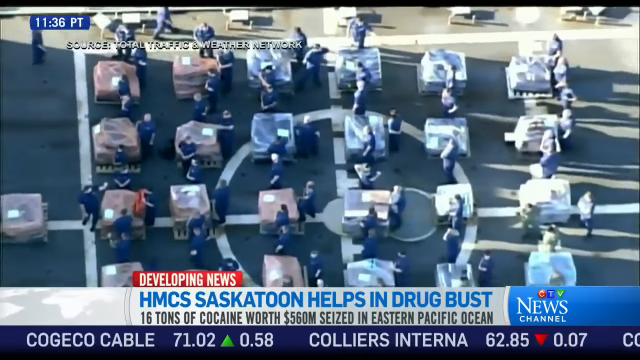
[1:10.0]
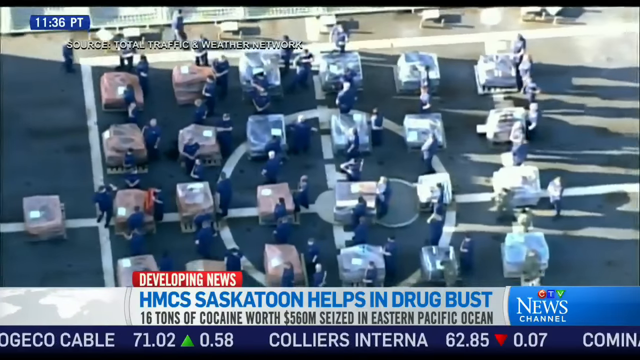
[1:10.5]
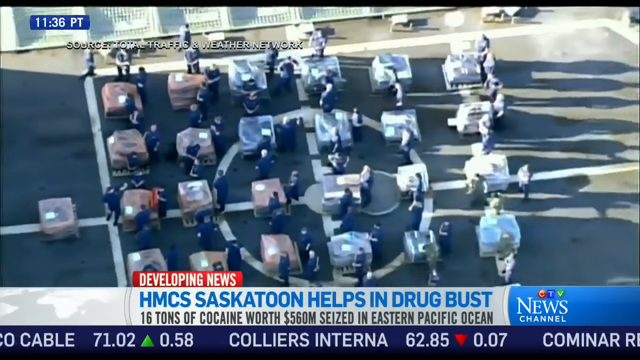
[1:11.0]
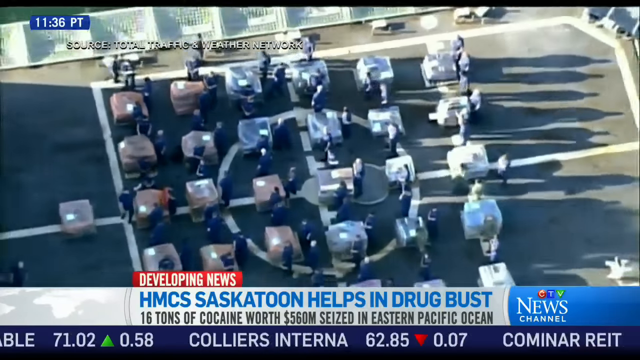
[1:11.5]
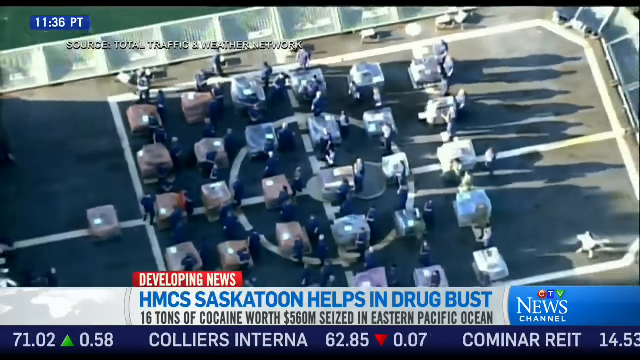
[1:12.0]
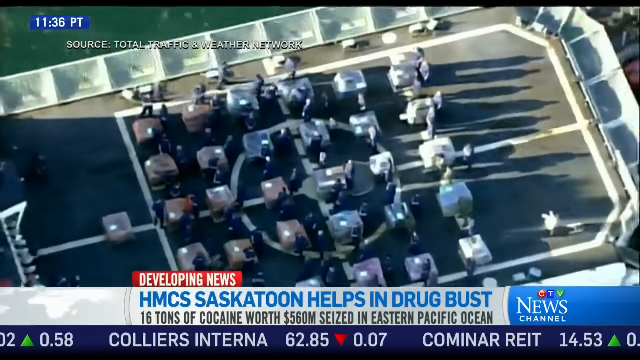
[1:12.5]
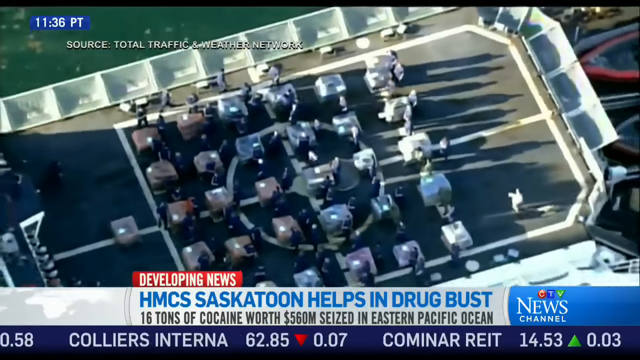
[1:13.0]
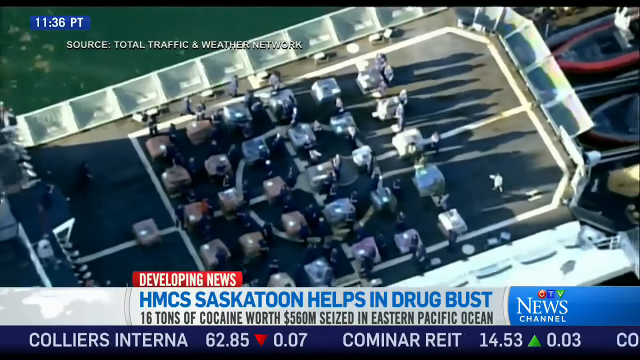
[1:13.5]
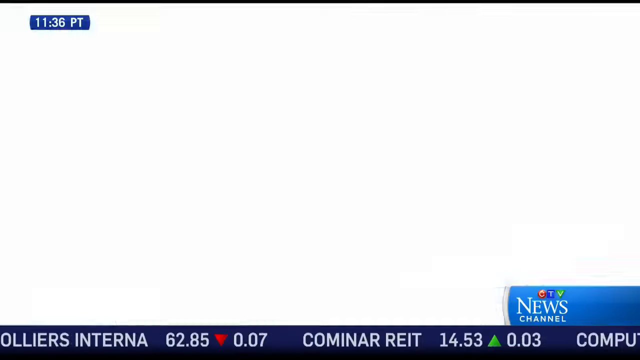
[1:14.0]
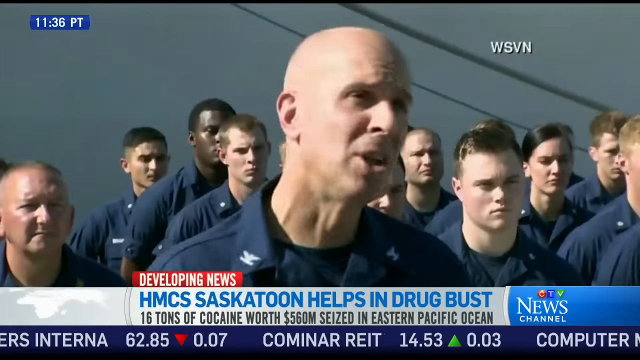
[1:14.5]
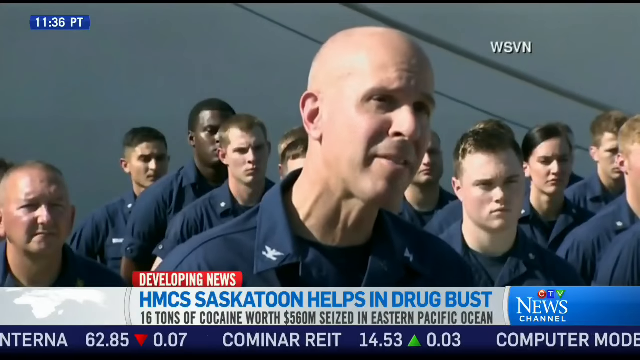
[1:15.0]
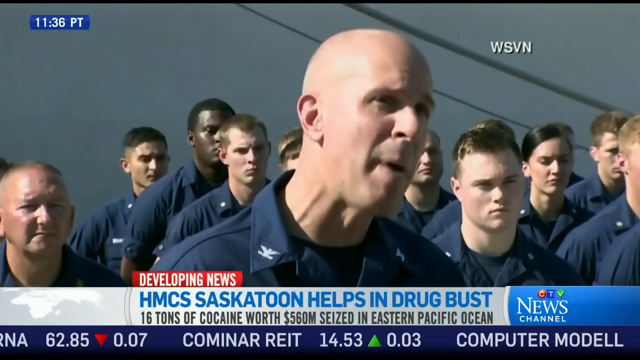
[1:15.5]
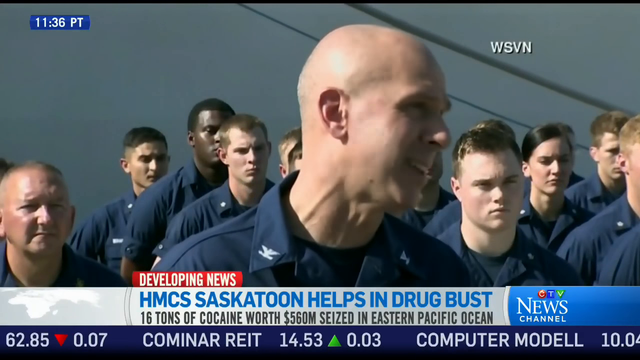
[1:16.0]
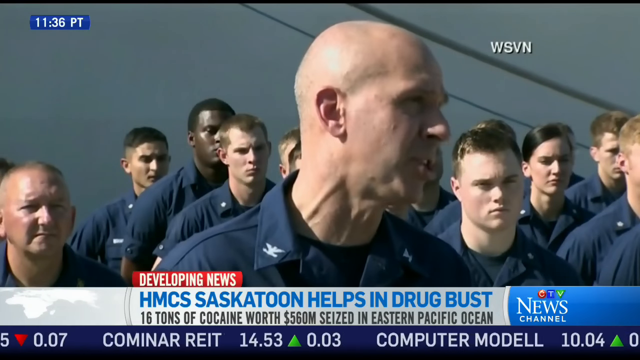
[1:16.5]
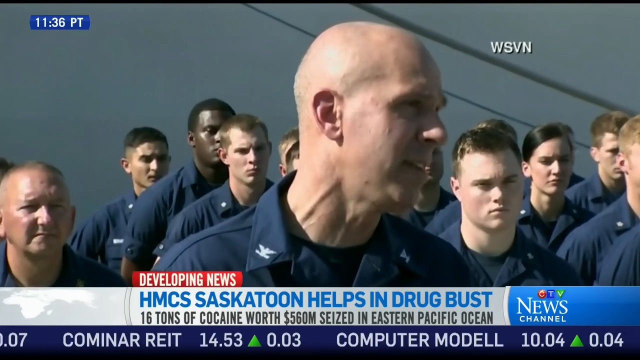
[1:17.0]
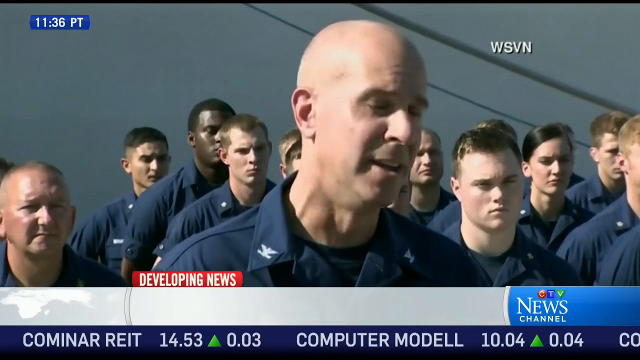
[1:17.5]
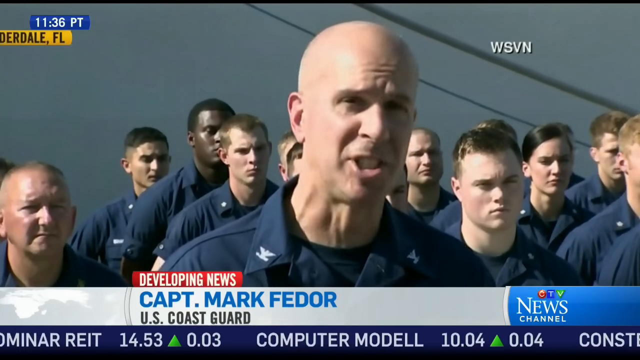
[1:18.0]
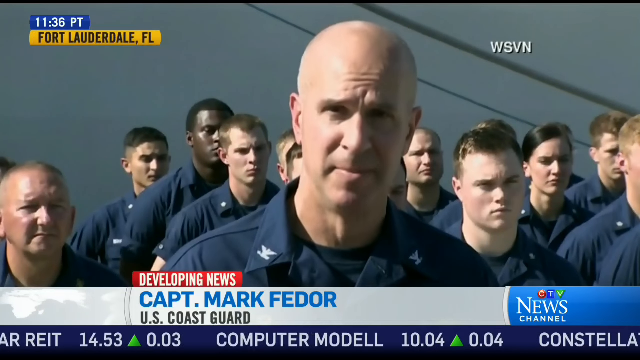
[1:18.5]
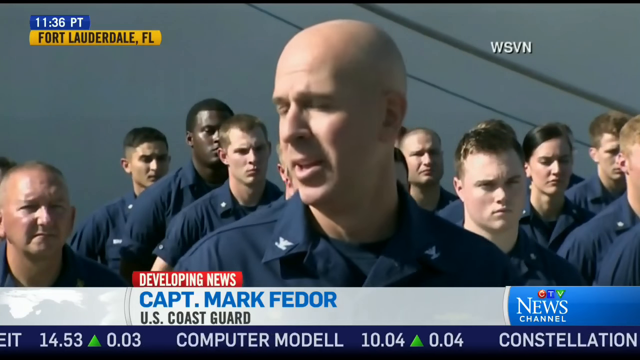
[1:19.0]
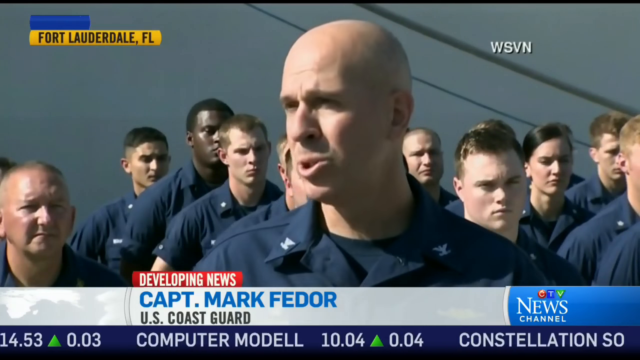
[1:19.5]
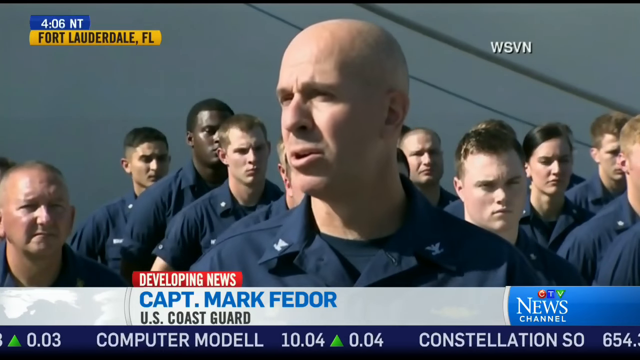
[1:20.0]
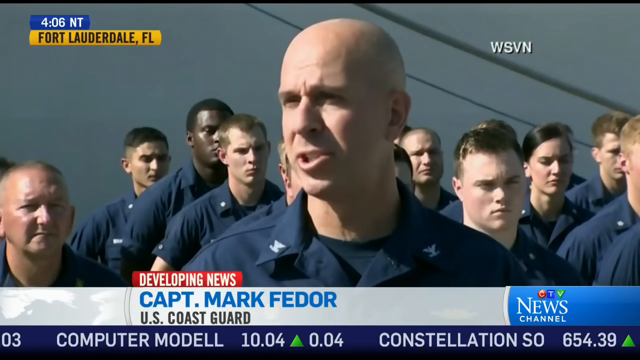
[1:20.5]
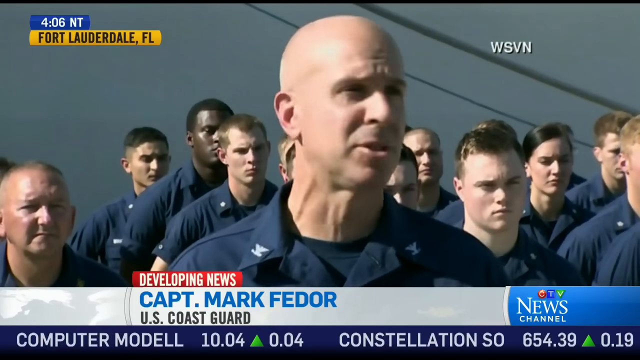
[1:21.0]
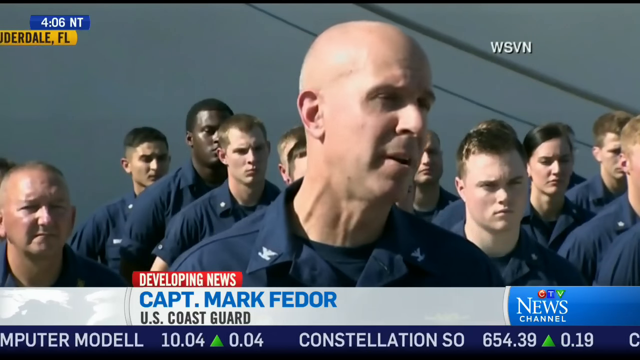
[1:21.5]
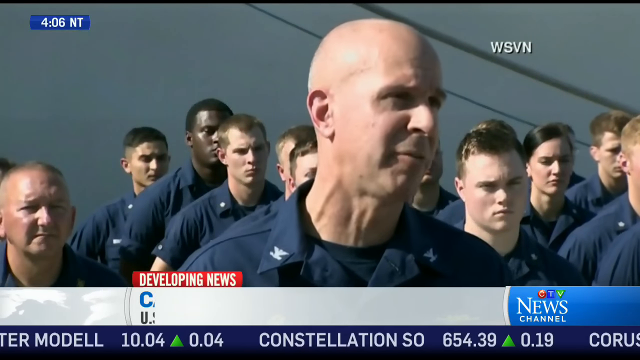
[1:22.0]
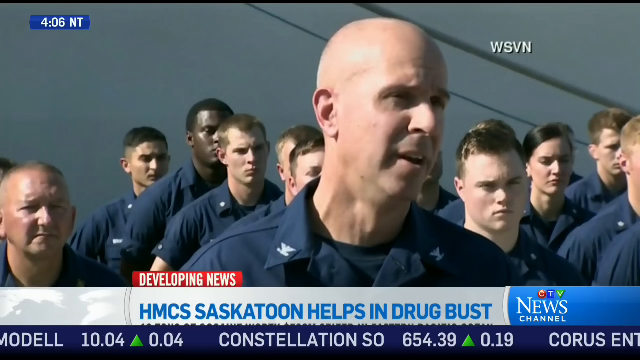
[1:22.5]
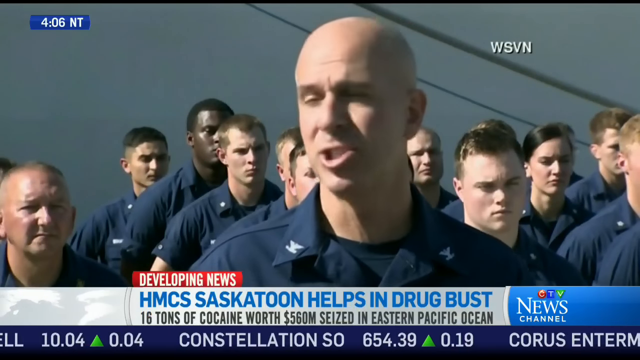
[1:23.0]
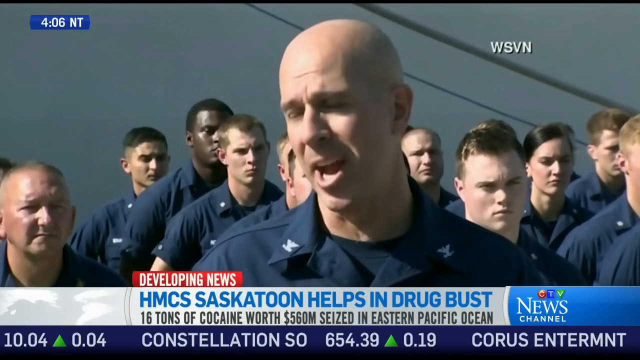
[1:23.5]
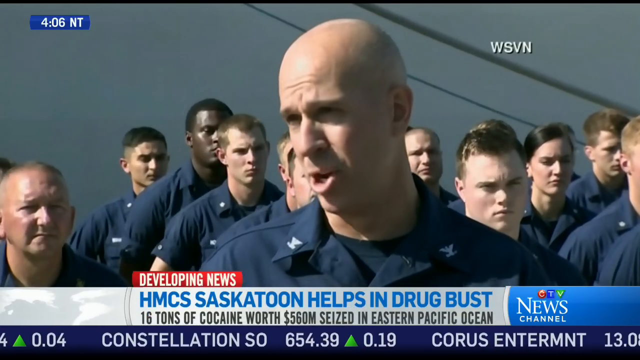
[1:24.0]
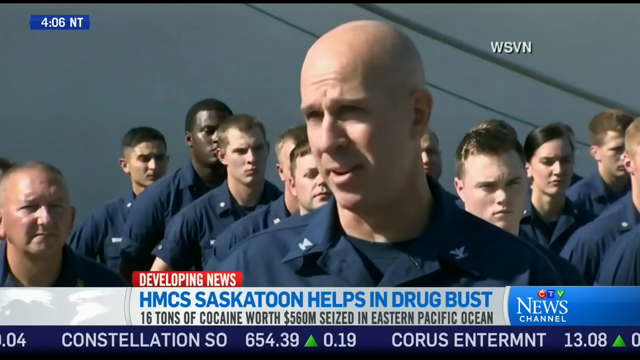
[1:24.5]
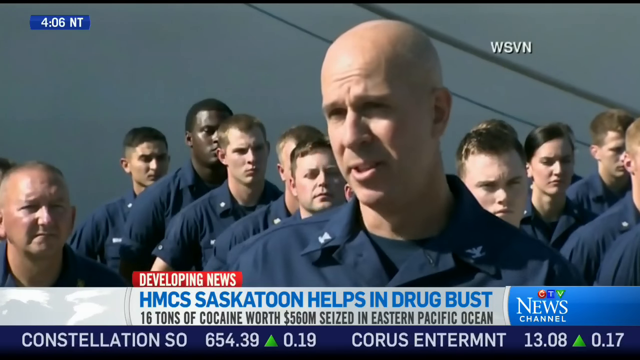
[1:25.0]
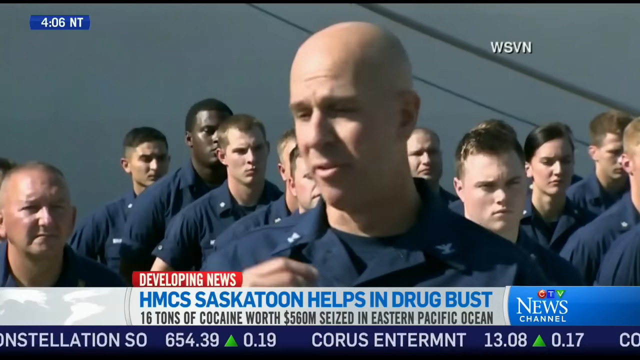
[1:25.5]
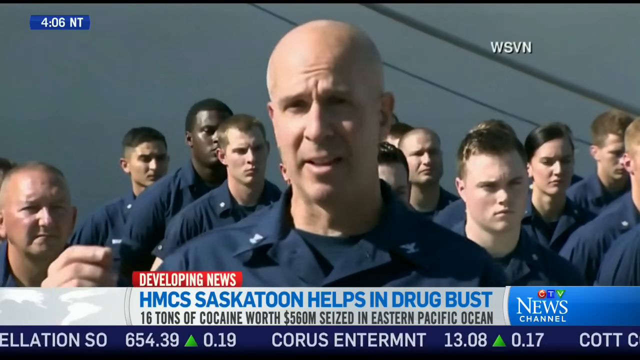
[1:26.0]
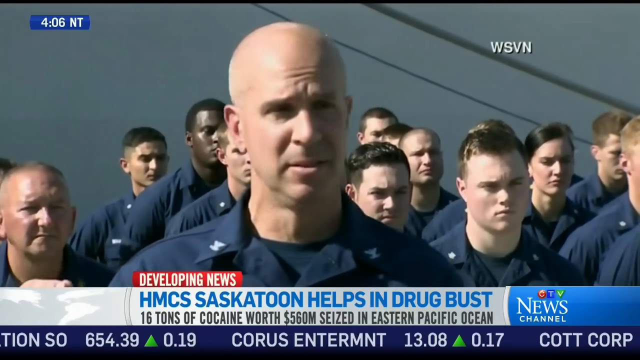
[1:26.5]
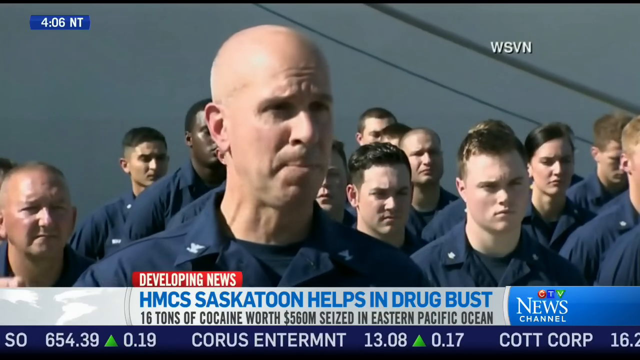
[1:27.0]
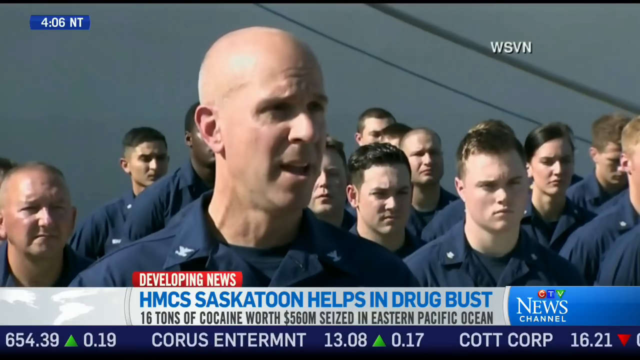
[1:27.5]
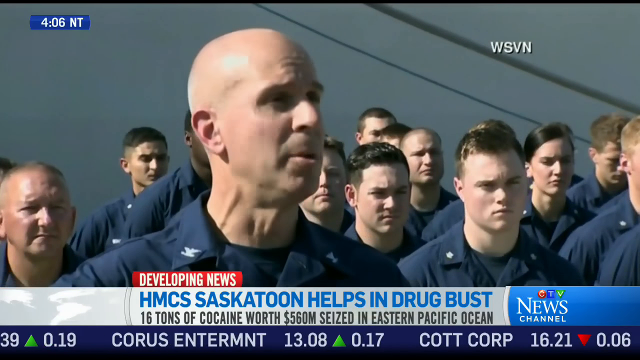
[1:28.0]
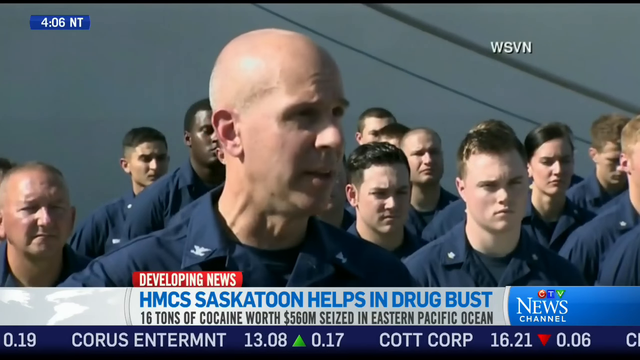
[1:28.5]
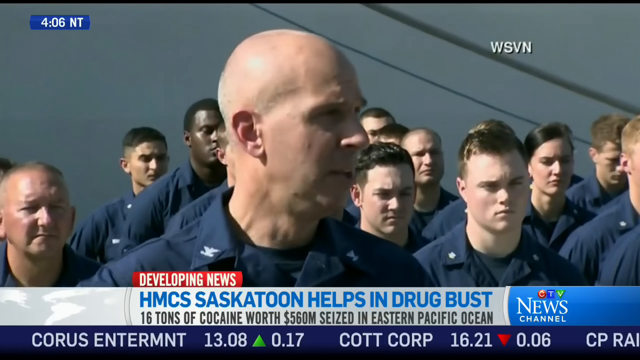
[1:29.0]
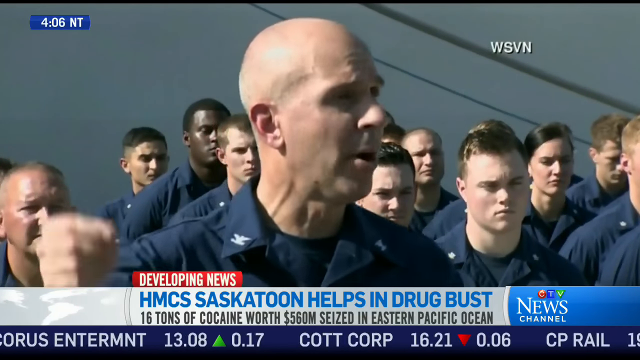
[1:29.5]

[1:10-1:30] Footage on the deck of a boat carries the source "total traffic and weather network." There are pallets, and a bunch of people in dark blue uniforms go around inspecting them. At the bottom is the news ticker with the developing news text "HMCS Saskatoon helps in drug bust, 16 tons of cocaine worth 560 million seized in the Eastern Pacific Ocean." The shot pans out, showing the people on the deck inspecting the pallets. The video then goes to what appears to be a press conference: what looks like a bunch of Coast Guard soldiers are in the background and a bald man is in the front. His name, Captain Mark Fedor of the U.S. Coast Guard, pops up at the bottom, and "Fort Lauderdale, Florida" appears at the top. He talks; it looks like he is being interviewed or giving a press conference.